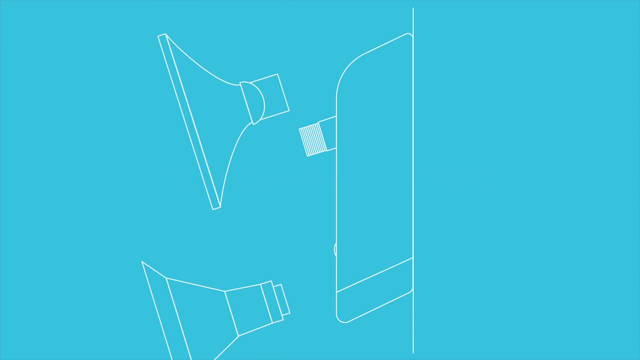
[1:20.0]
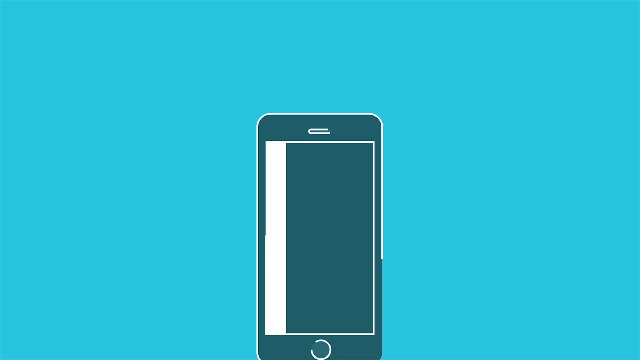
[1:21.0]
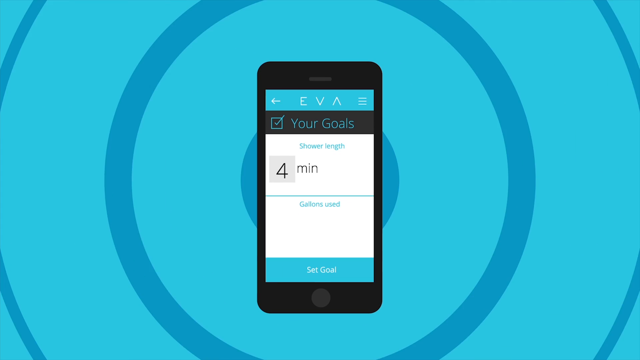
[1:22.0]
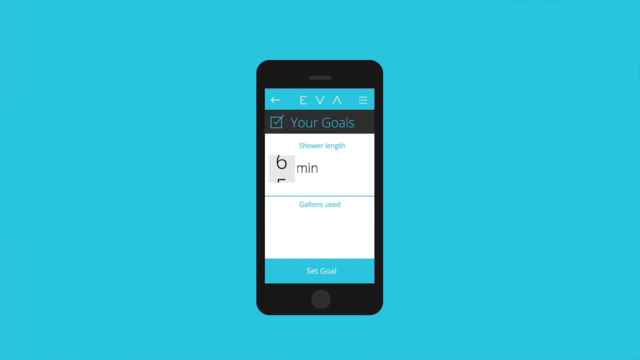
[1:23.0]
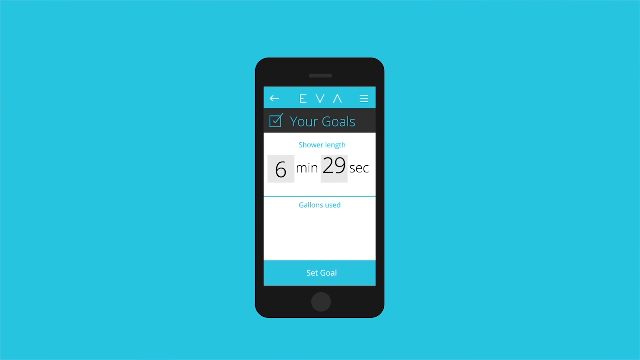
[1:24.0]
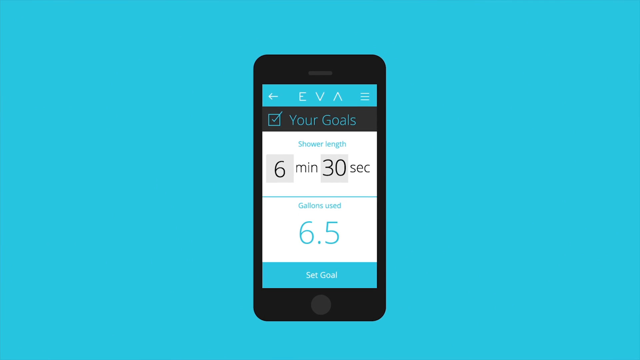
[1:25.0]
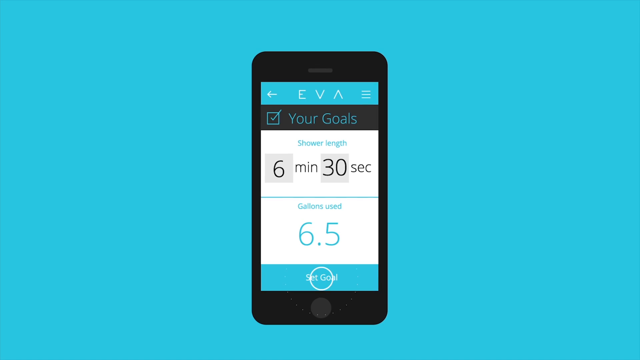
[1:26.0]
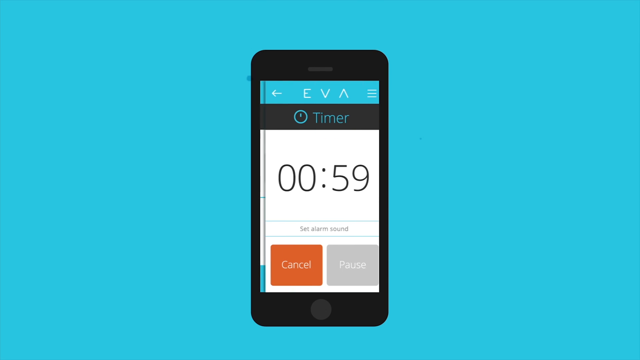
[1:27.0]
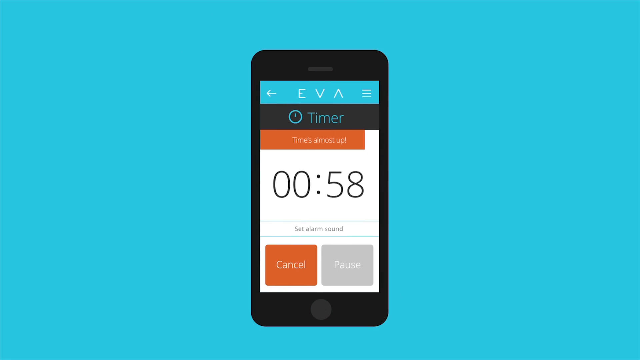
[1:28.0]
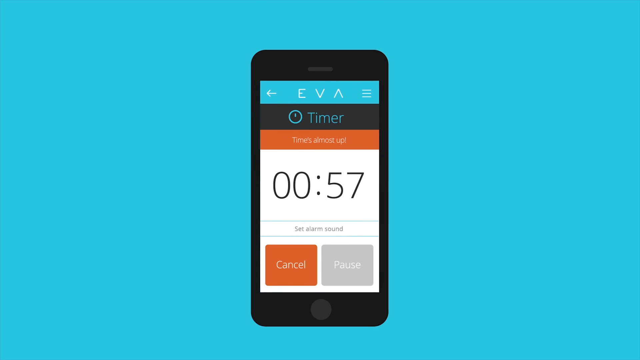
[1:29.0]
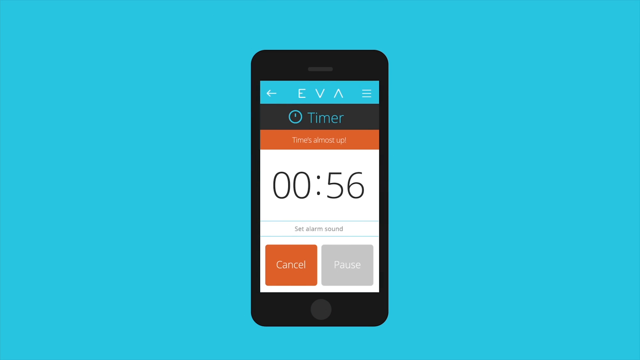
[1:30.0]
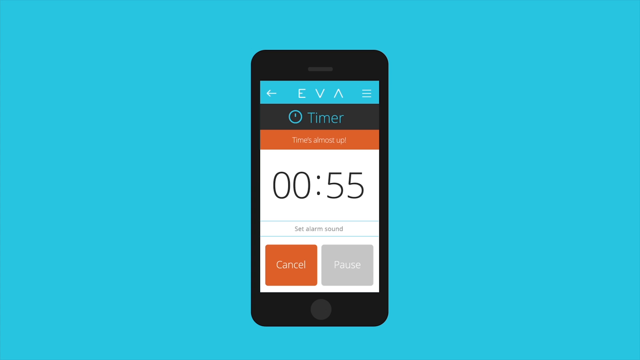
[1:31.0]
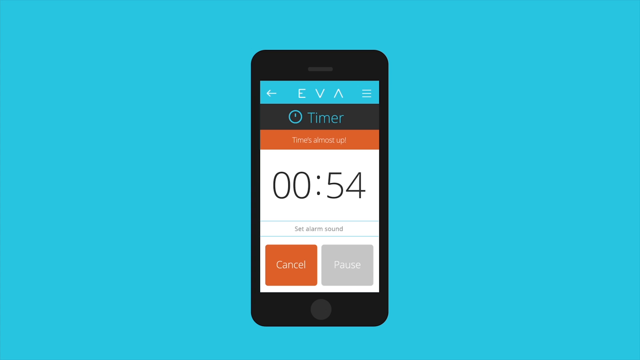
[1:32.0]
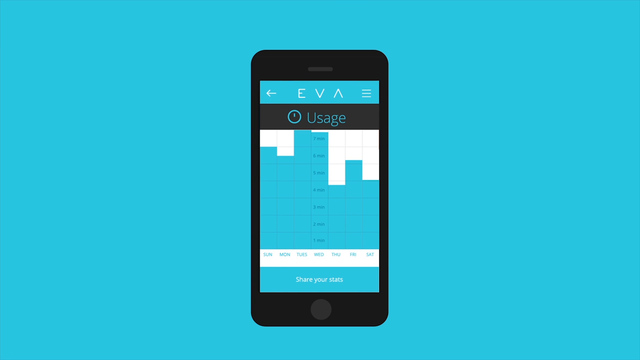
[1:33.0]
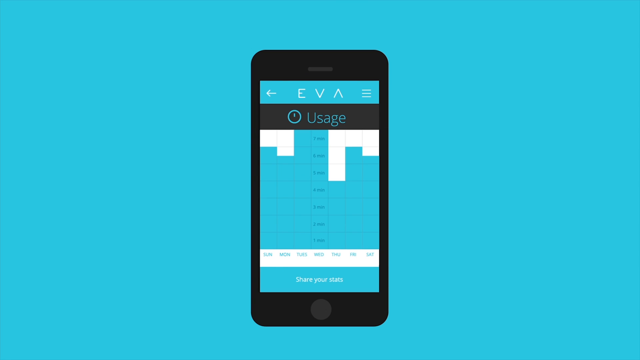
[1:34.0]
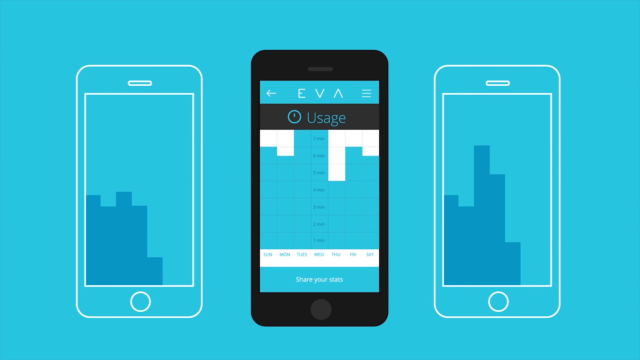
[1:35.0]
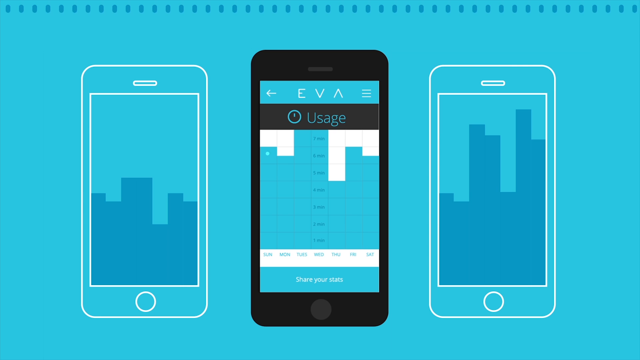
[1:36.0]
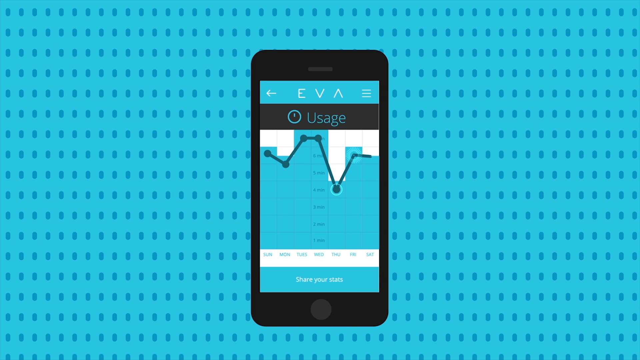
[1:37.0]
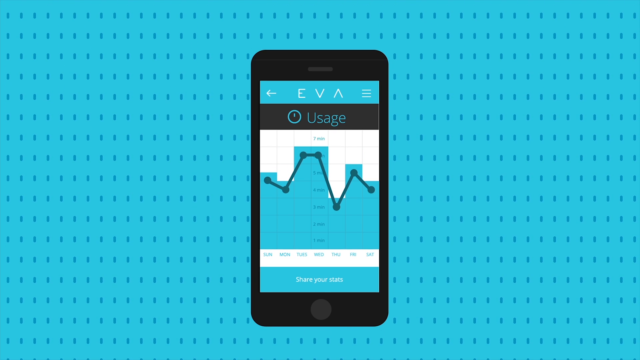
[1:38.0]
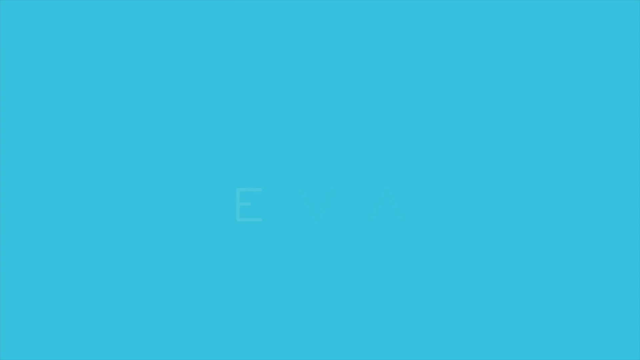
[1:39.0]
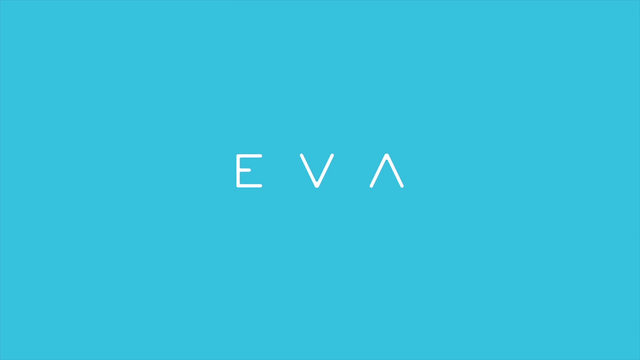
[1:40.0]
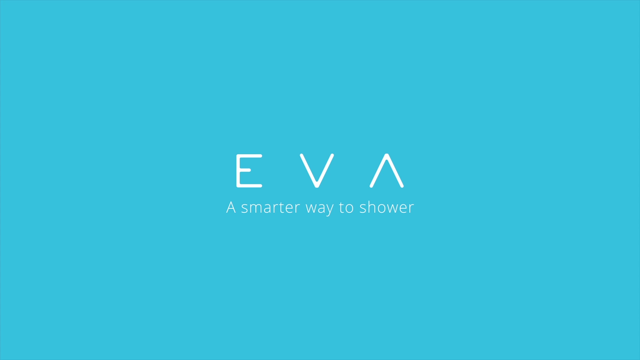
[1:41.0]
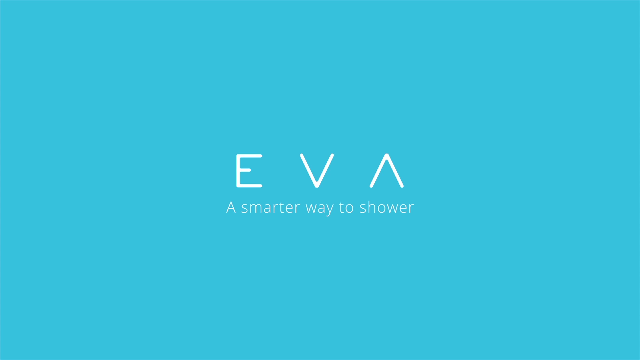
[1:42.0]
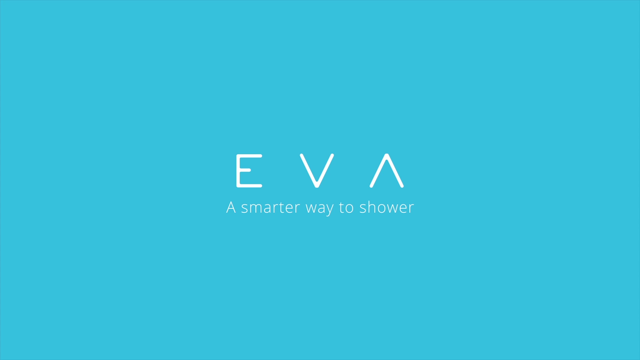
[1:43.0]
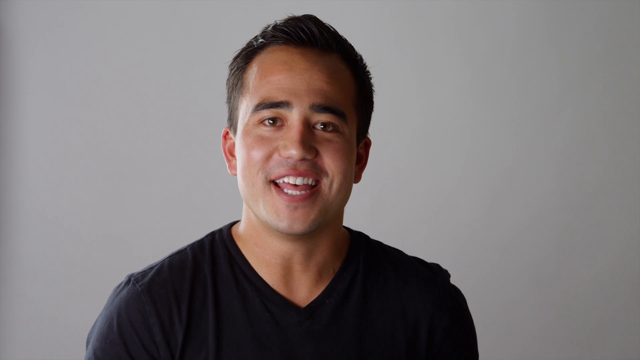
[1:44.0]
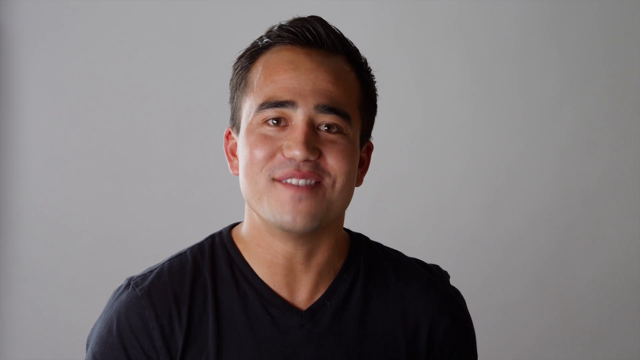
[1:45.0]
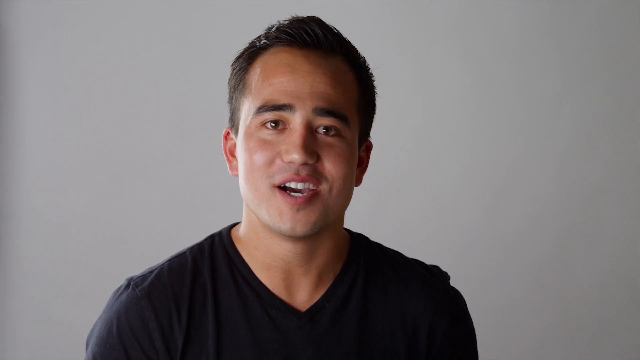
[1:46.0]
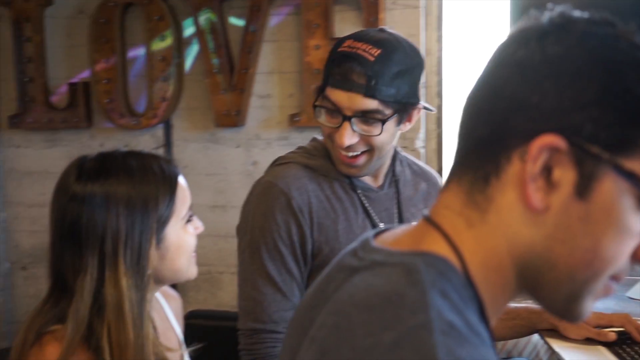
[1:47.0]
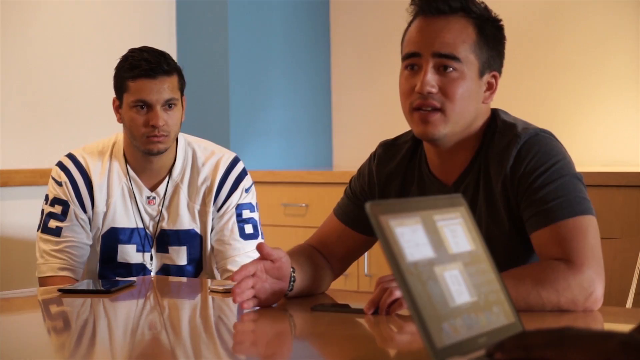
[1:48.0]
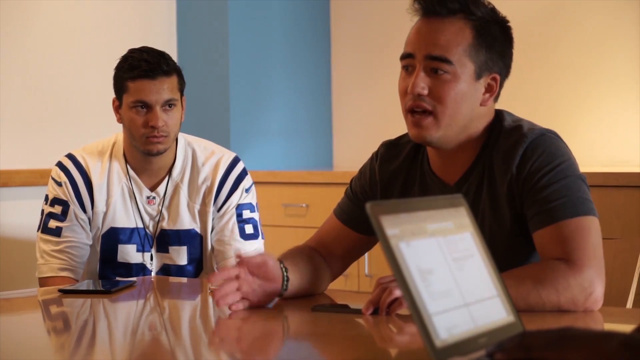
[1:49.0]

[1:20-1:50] The background remains sea green, with diagrams in white. A diagram of a black mobile device appears with an application open. The application's heading is the text "EVA" in white on a sea green background. Below this, text in blue on a black background states "your goals". Below that is the text "shower strength", and below it a dial for selecting a numeric value, set to 6 minutes and 30 seconds. Further text below, in sea blue on a white background, states "gallons used 6.5". The user presses the button "set goal", and the application shows a different screen with the text "timer" and, below it, a timer counting down from 60 seconds. Meanwhile more text appears on the app stating "times almost up", followed below by the text "set alarm sound" and two buttons, "cancel" and "pause". The app then shows some usage statistics, and finally a graphical representation of the amount of water used. This is followed by the text "Eva a smarter way to shower" shown on the entire screen. After this, a young man, perhaps in his twenties, starts talking.